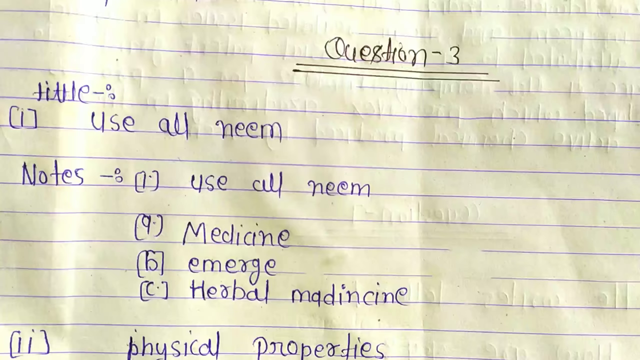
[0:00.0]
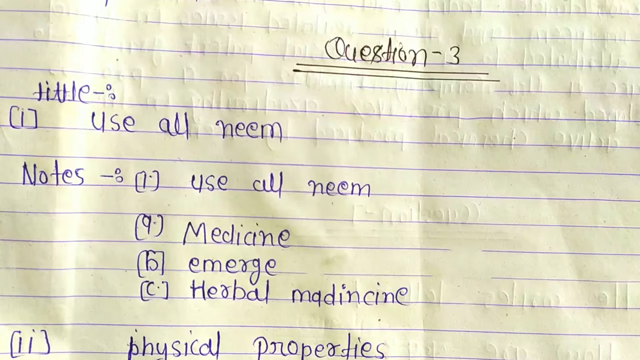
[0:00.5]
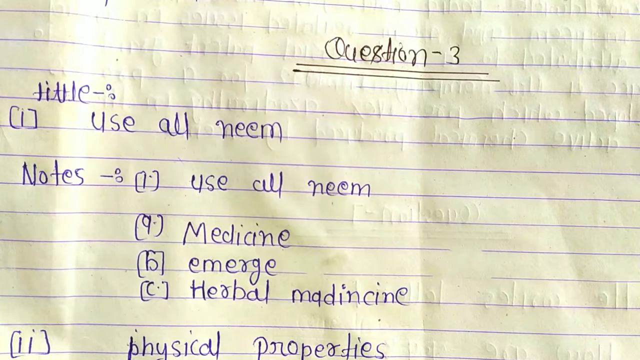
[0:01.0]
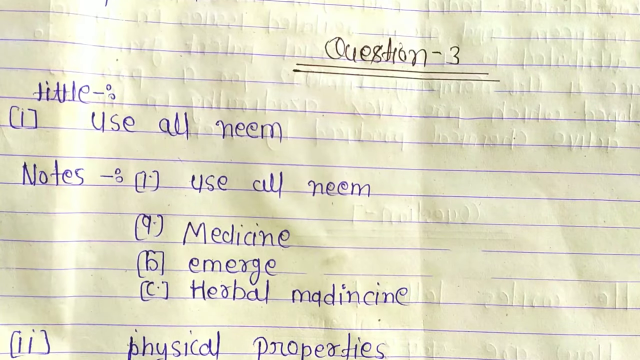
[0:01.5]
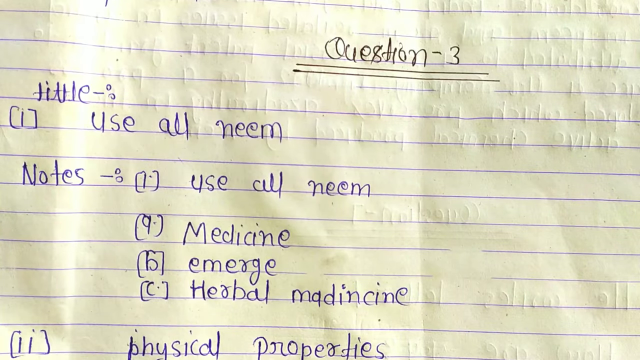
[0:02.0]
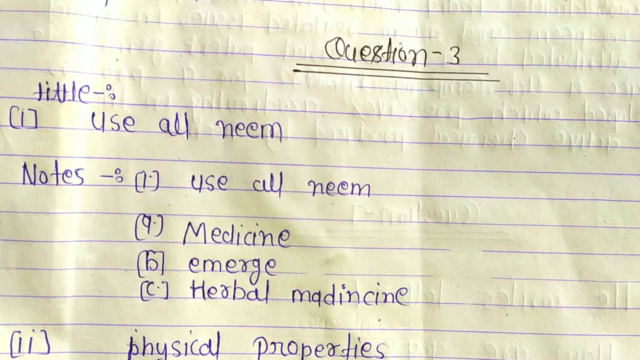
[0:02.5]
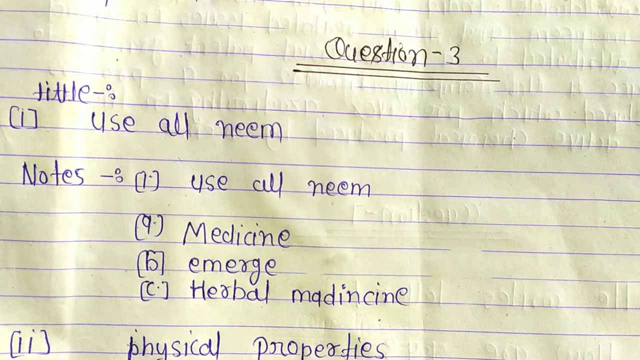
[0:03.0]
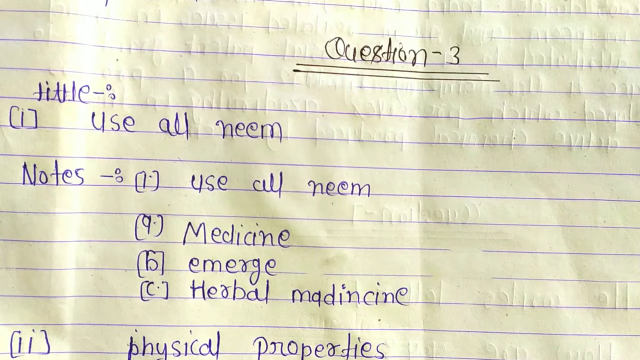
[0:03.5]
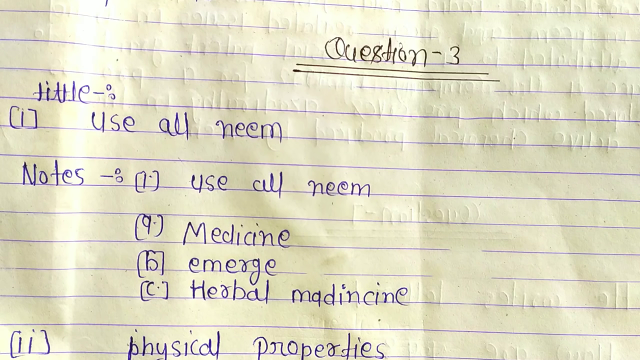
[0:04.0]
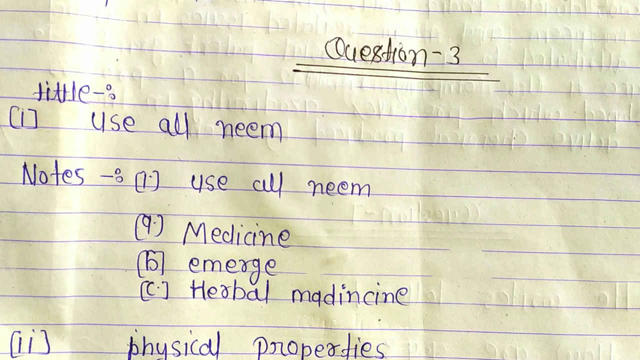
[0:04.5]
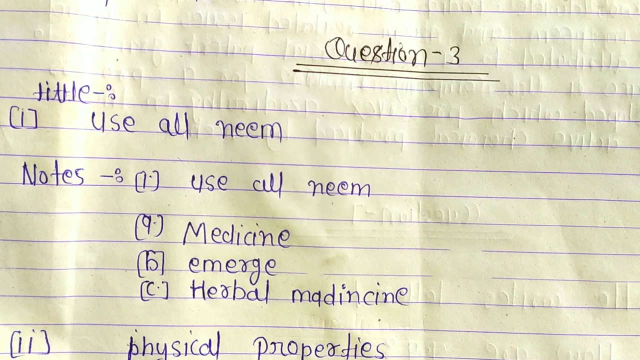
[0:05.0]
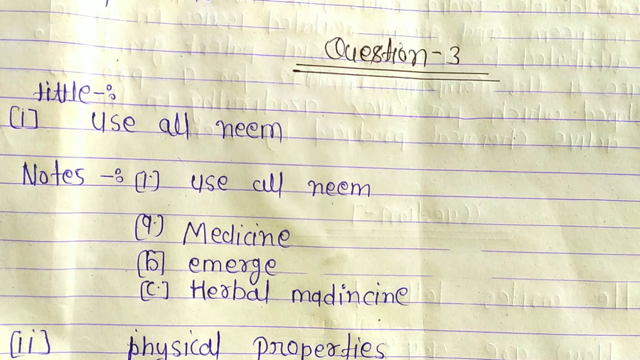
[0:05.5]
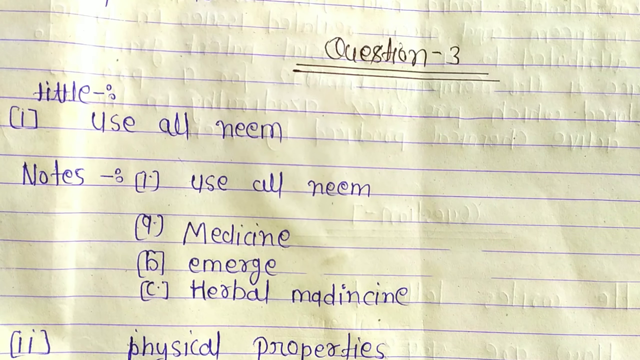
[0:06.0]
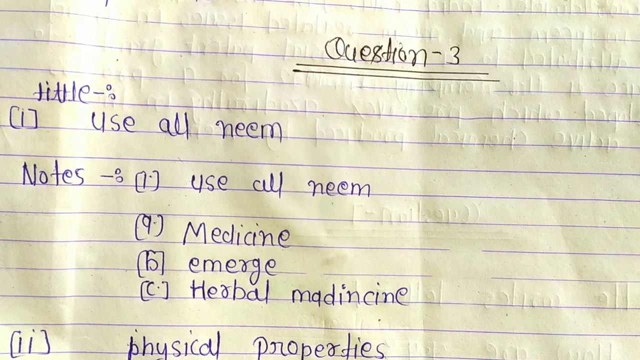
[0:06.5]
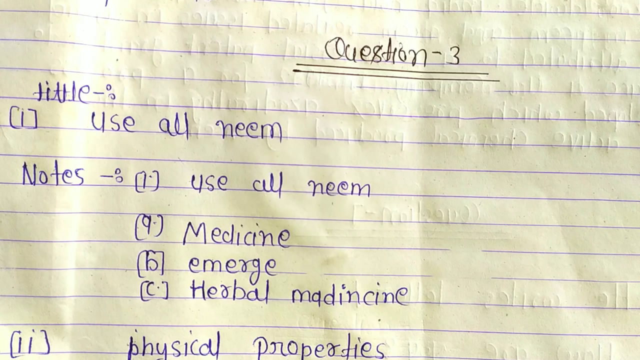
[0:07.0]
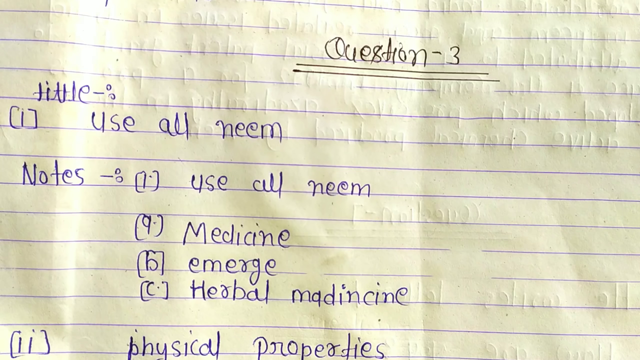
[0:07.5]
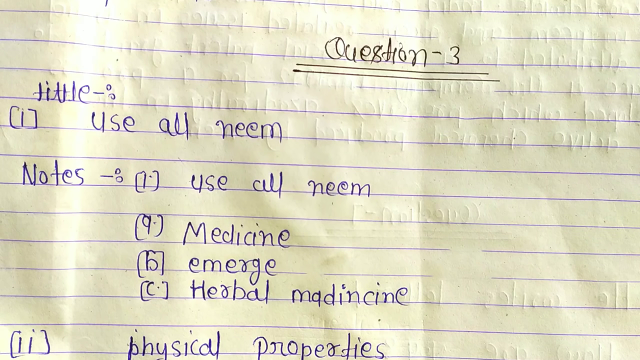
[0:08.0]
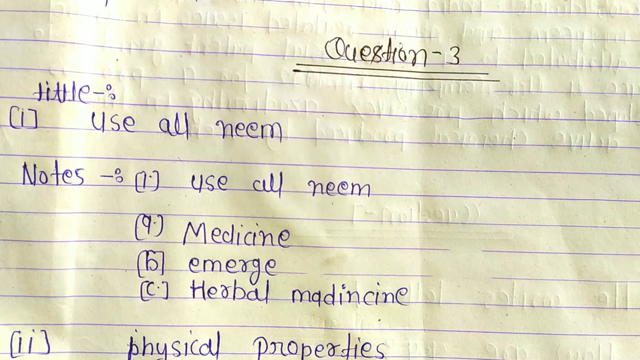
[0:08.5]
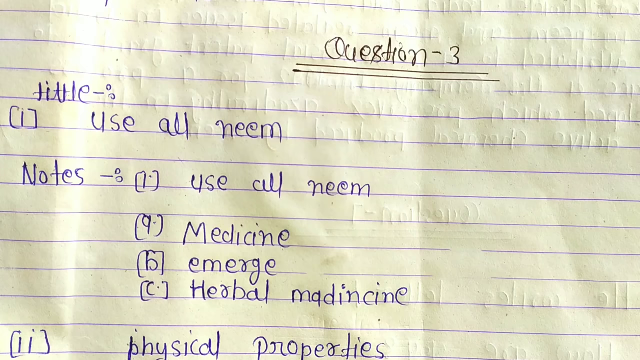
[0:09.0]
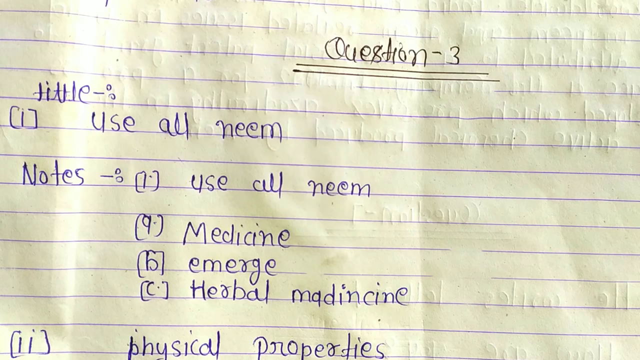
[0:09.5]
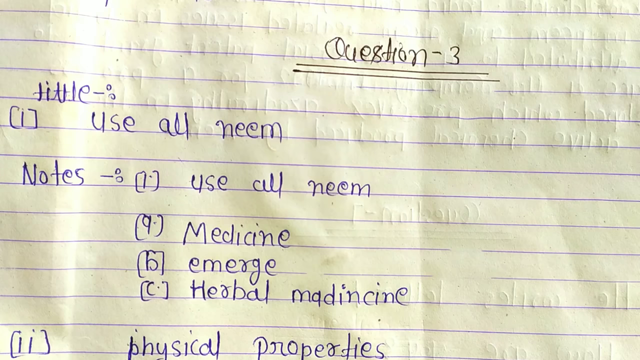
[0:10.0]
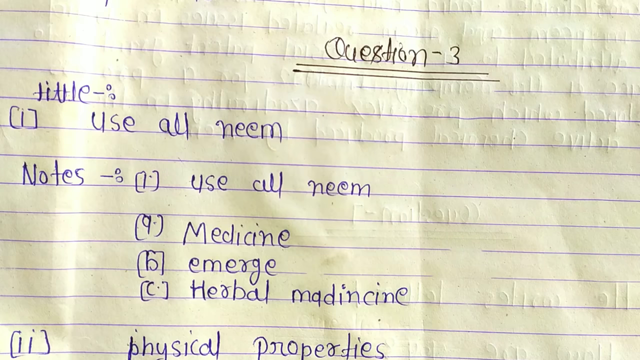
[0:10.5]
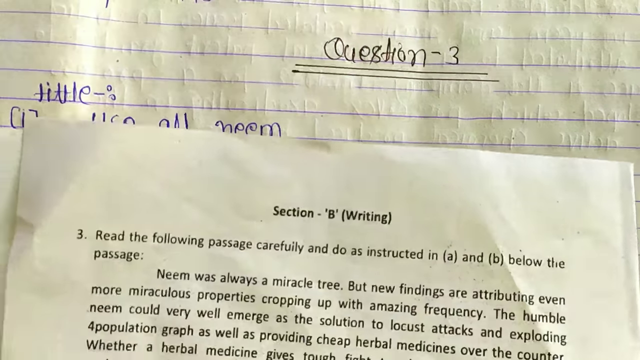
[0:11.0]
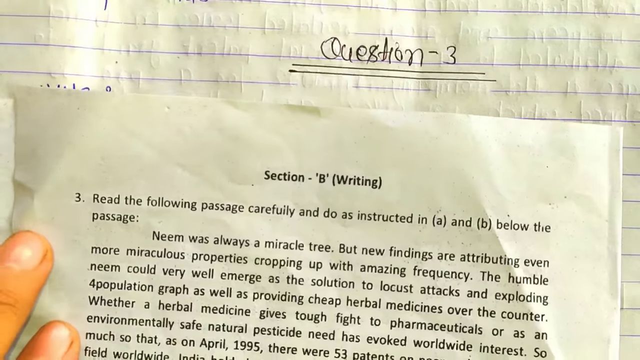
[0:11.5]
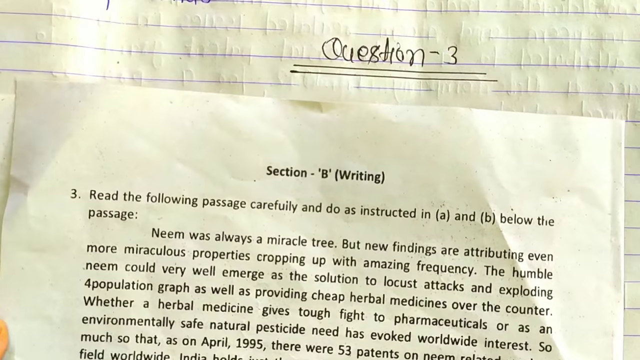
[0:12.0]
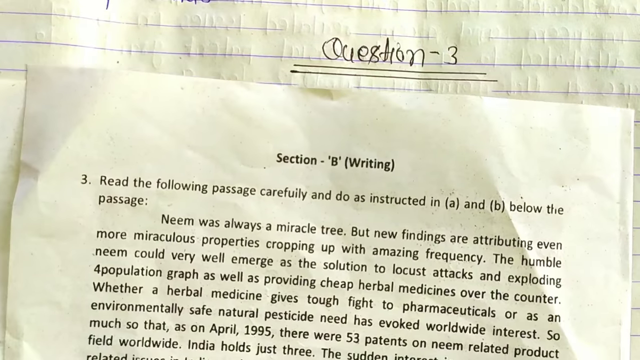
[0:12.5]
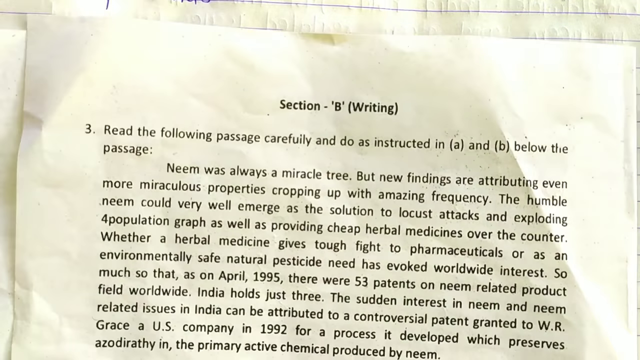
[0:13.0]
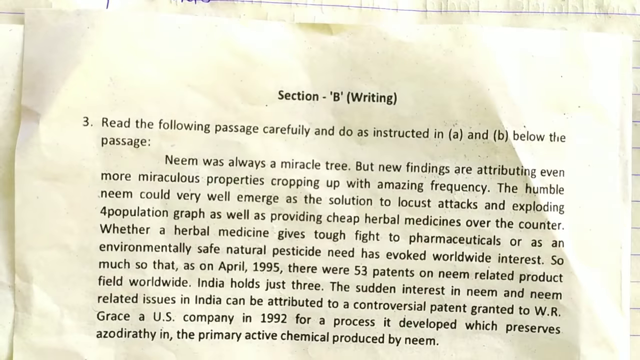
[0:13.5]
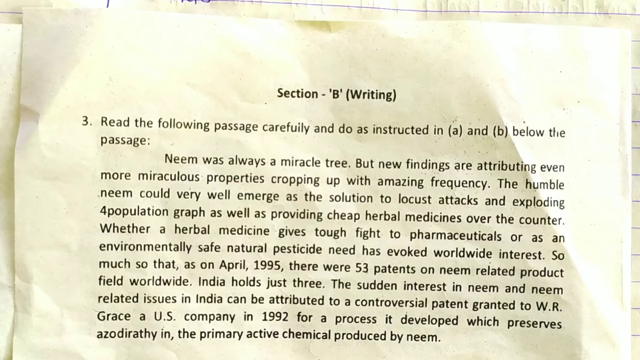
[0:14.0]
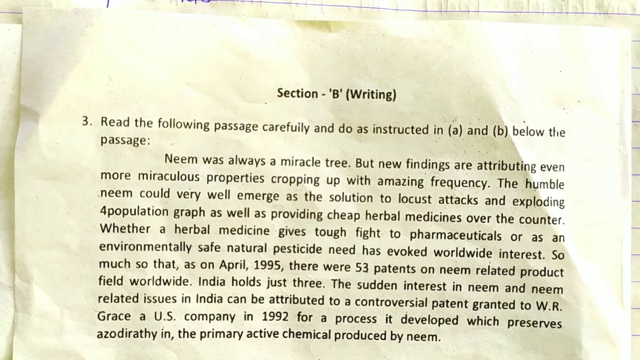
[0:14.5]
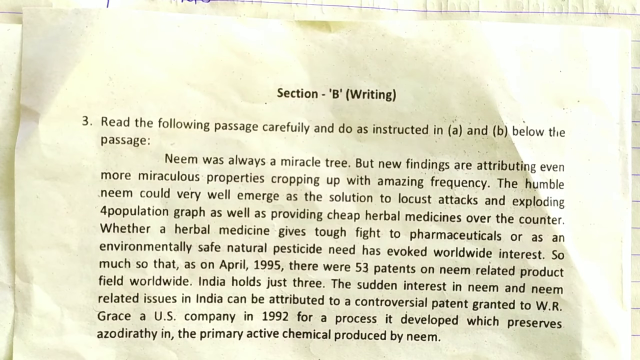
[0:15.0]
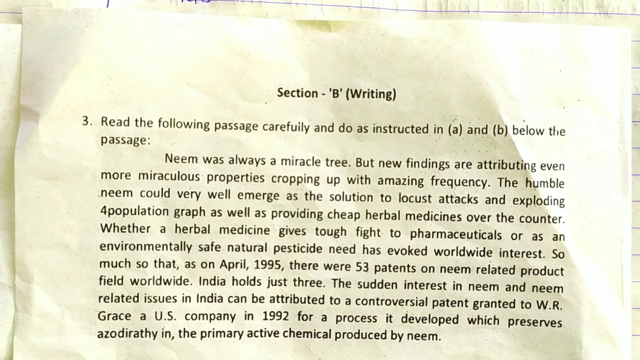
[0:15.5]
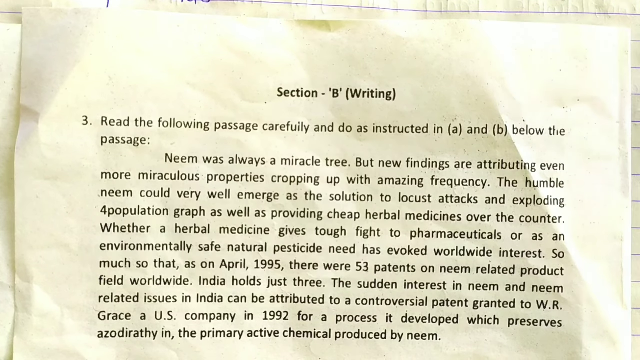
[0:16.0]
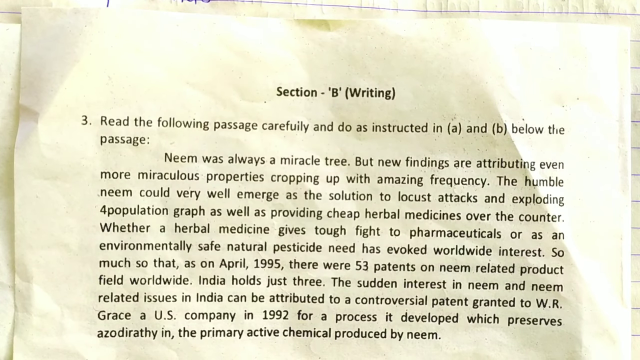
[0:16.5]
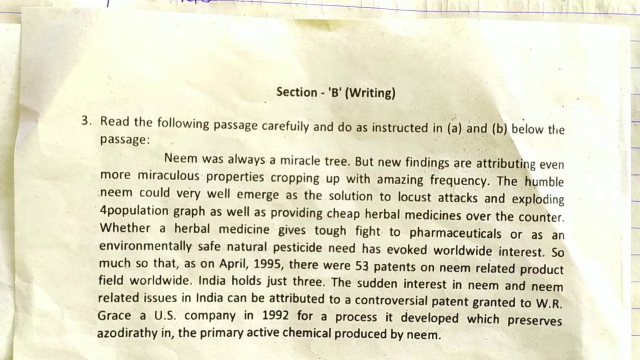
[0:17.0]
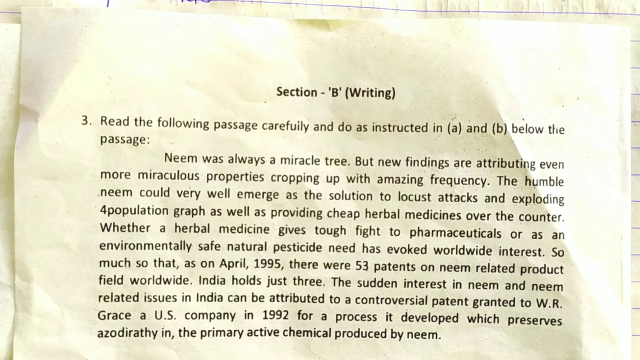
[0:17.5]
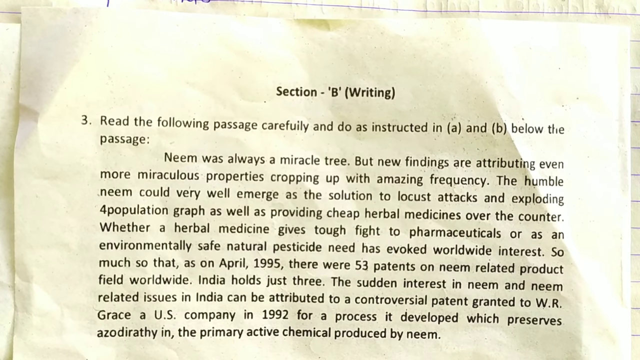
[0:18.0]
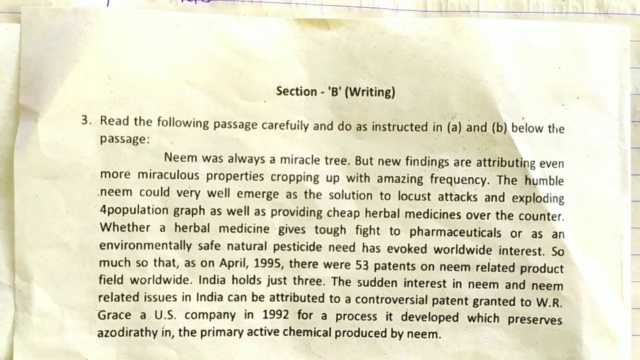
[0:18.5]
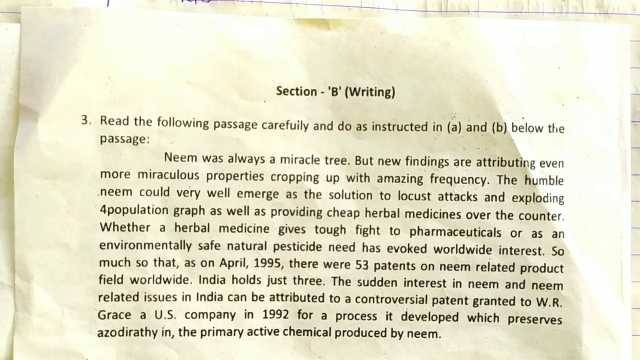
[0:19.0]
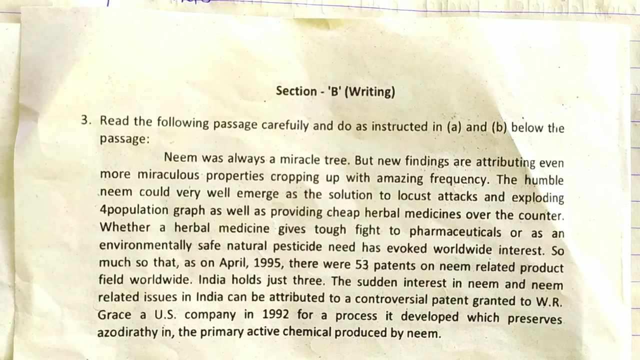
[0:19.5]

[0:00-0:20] Text written in black ink reads "question three" and is underlined twice. The page is composition-style notebook paper with writing in blue ink. The blue text reads "title use or N-E-E-M" and then "notes use or N-E-E-M", followed by "medicine emerge herbal medicine", where "medicine" is misspelled as M-A-D-I-N-C-I-N-E. "Physical properties" is written as the second part at the bottom. The paper then comes up, part of the person's left hand is visible, and the page reads "section B write in 3" followed by a passage about "neem" that says it "was always a miracle tree but new findings are attributing even more miraculous properties cropping up with amazing frequency", that "the humble neem could very well emerge as a solution to locust attacks", and mentions "providing cheap herbal medicines over the counter".